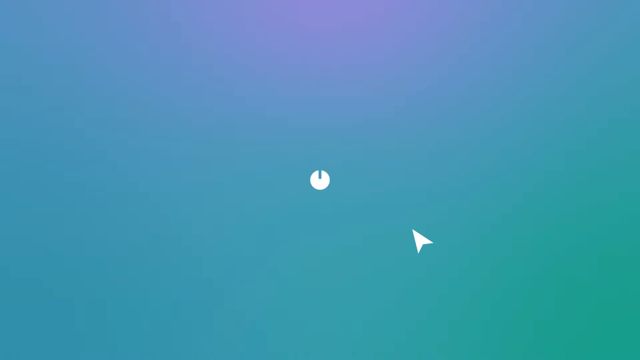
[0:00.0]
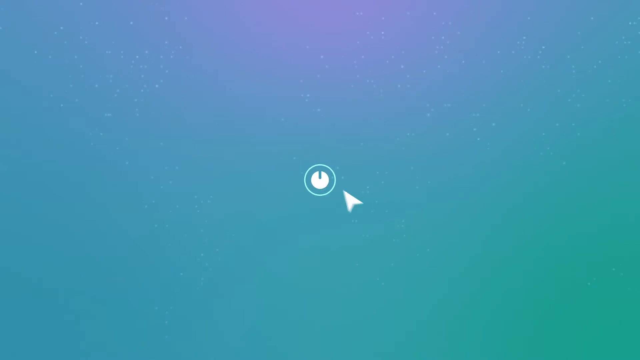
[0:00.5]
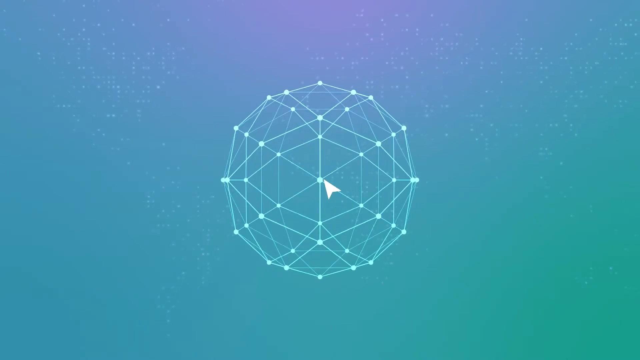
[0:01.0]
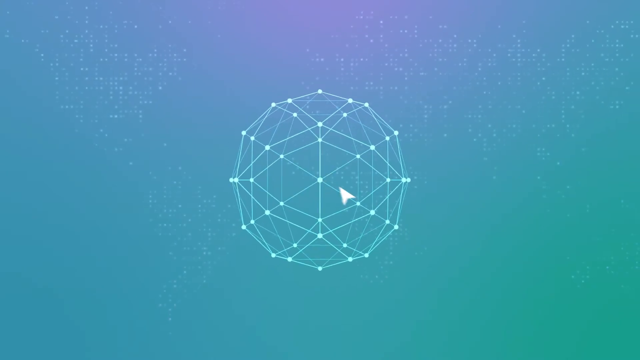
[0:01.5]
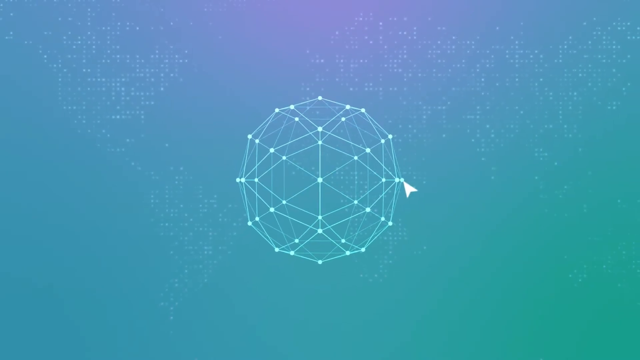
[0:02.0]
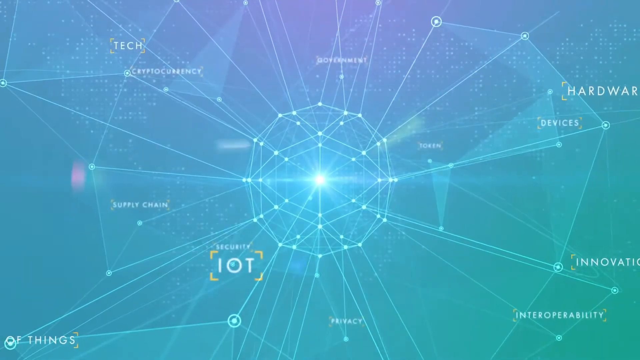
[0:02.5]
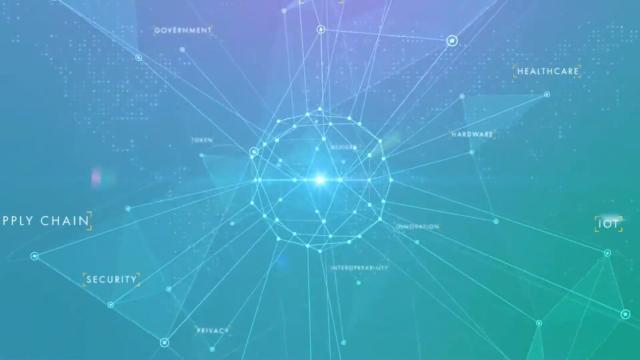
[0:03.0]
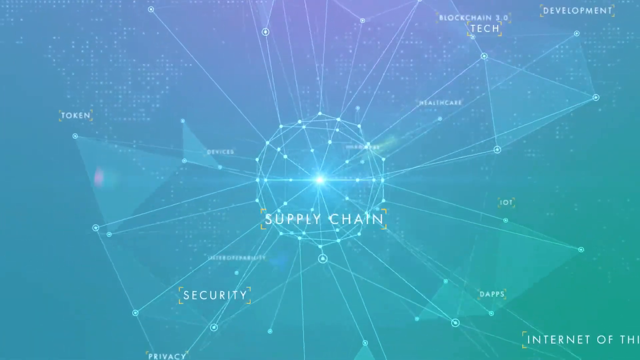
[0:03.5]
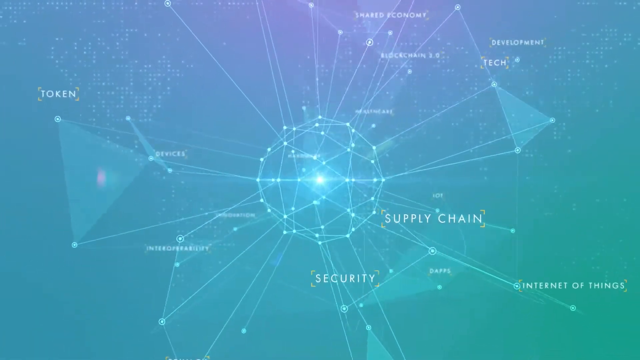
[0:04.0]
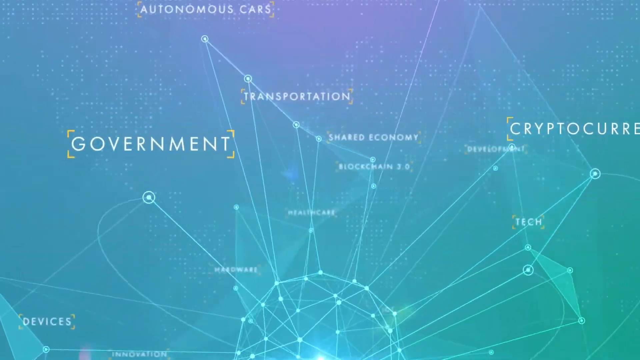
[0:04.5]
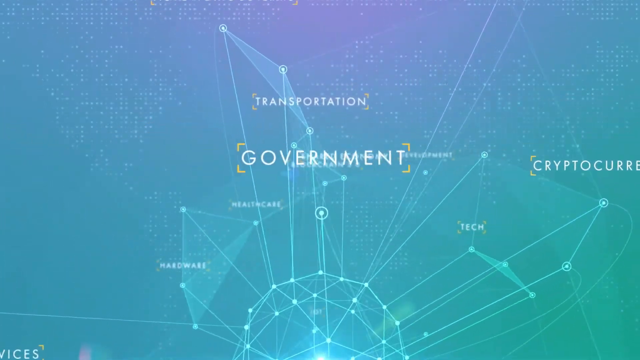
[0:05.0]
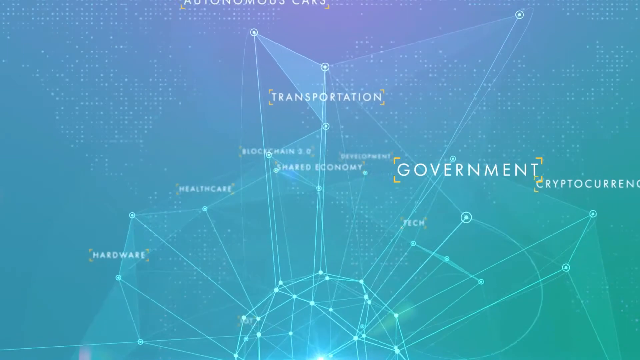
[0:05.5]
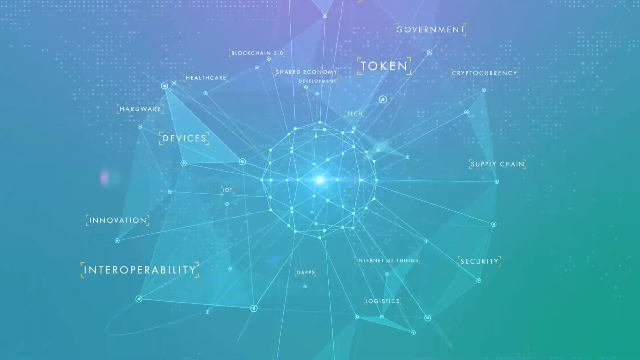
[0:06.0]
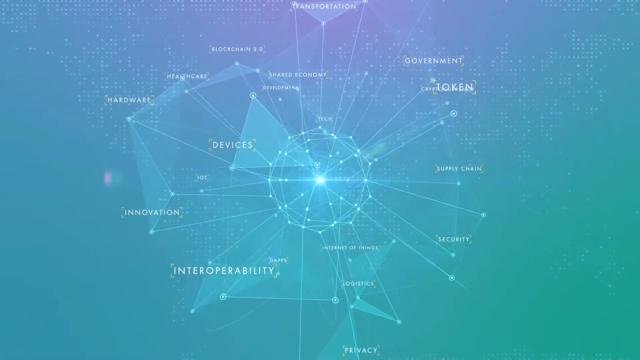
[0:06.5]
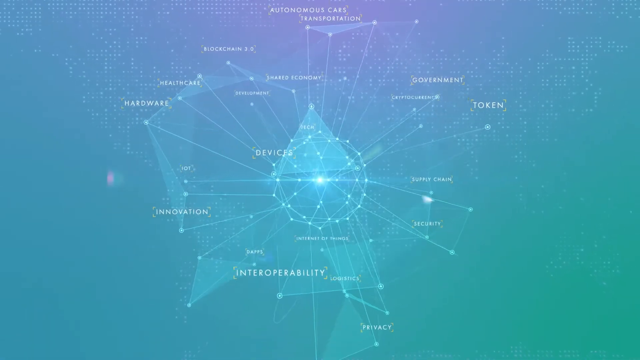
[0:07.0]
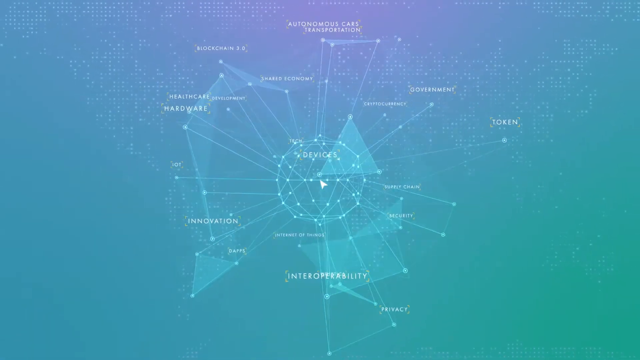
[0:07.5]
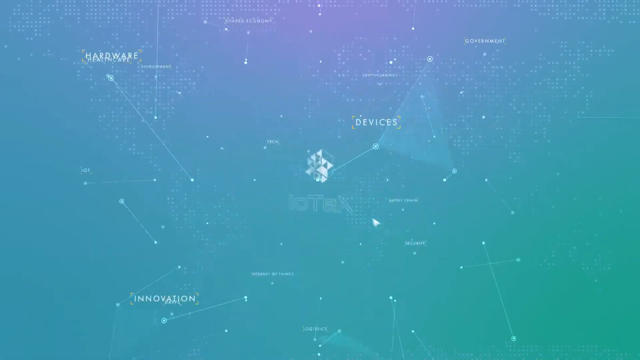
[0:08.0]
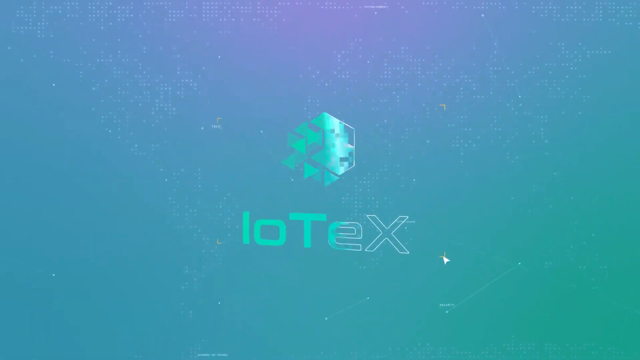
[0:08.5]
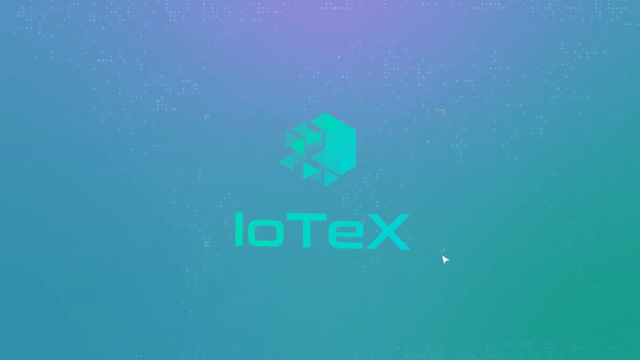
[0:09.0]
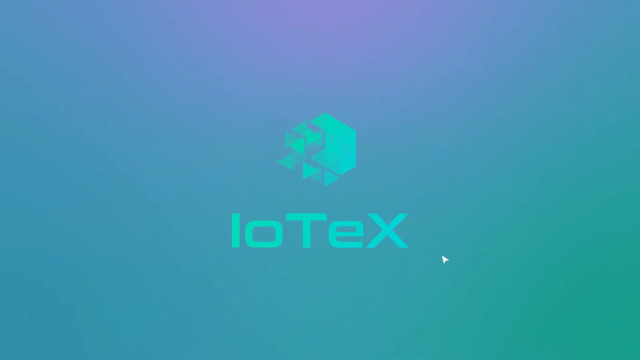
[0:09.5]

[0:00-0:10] The video opens on a light blue and purple, somewhat fluorescent background. It moves into a kind of neuron diagram connected by lines that looks like a diagram of many network-related things folded into one. Some of the points carry text labels: "currency", "government", "transportation", "healthcare" and "hardware". The diagram seems to move around between cells, and then there is a quick cut to a logo, which appears to include a partly filled-in hexagon. The logo is in the middle, and right below it, in the same color, is text that says "IoTeX".